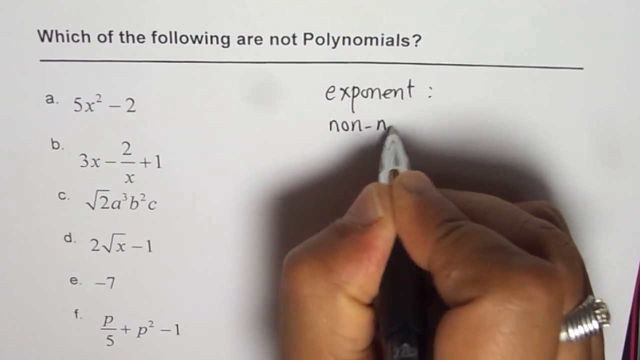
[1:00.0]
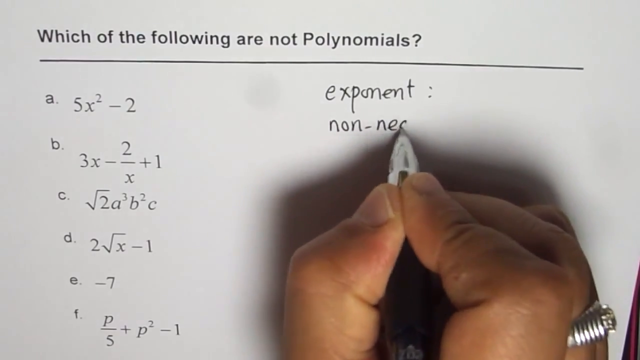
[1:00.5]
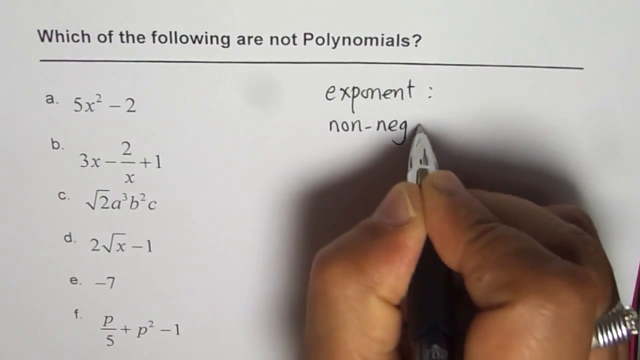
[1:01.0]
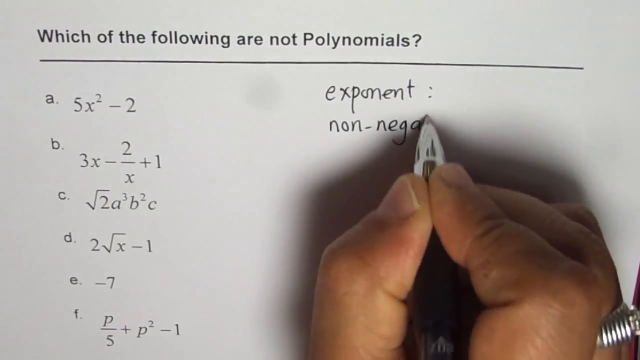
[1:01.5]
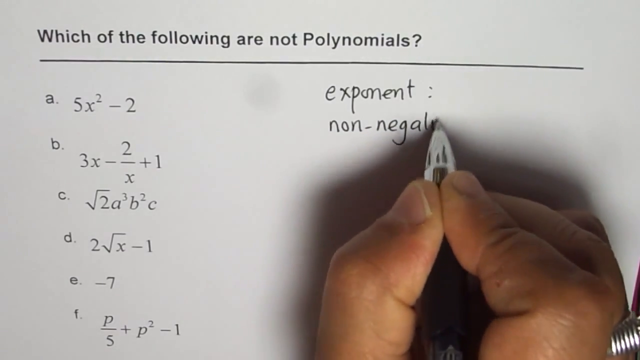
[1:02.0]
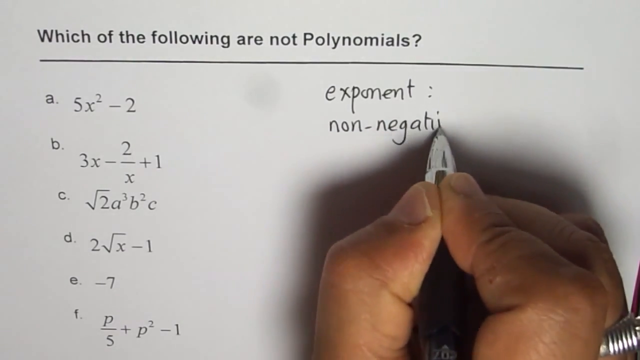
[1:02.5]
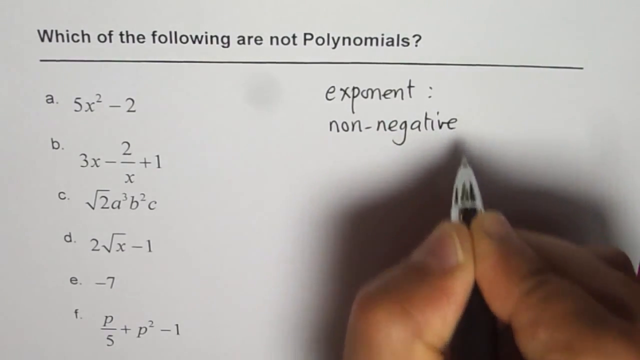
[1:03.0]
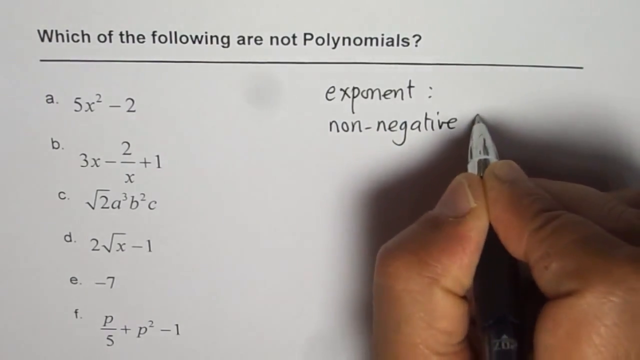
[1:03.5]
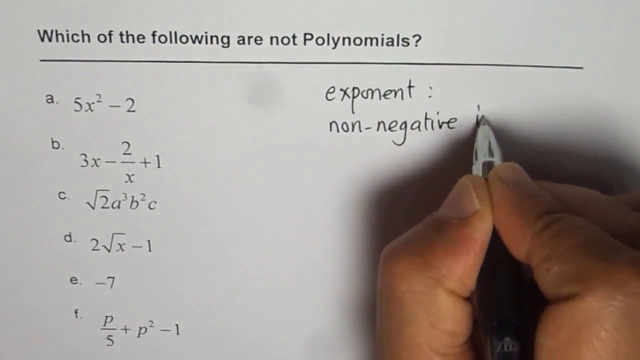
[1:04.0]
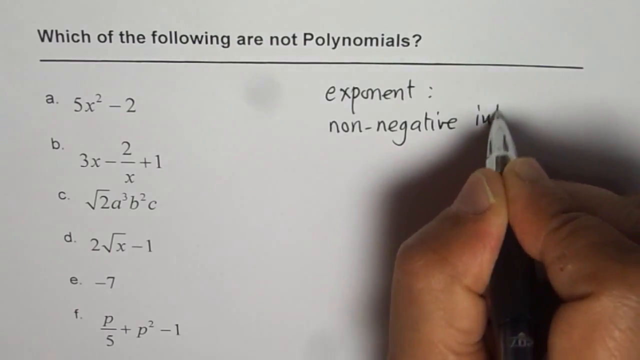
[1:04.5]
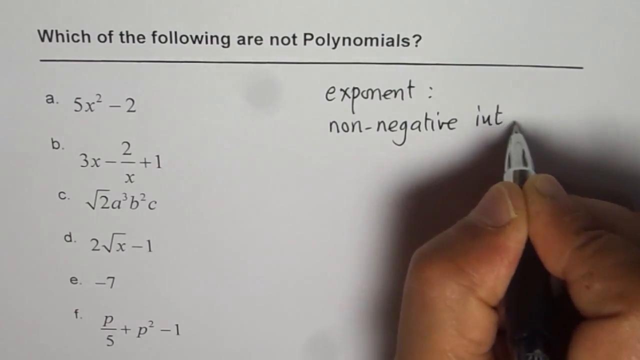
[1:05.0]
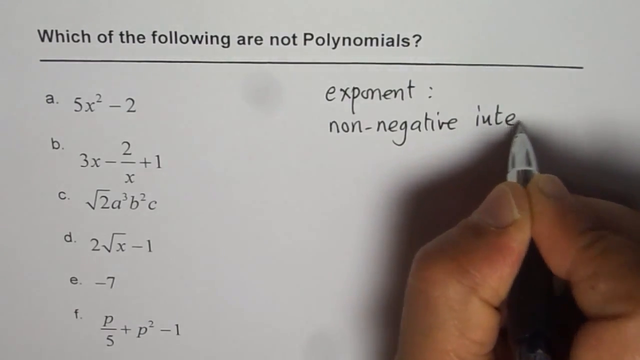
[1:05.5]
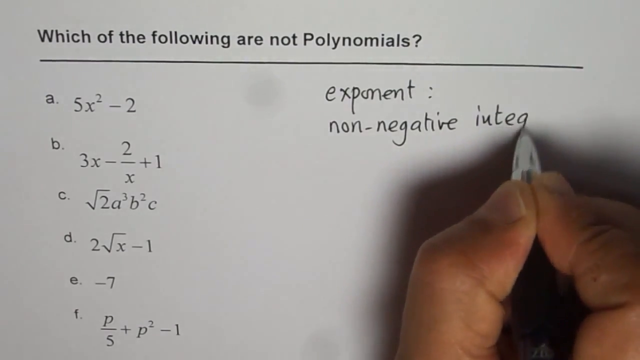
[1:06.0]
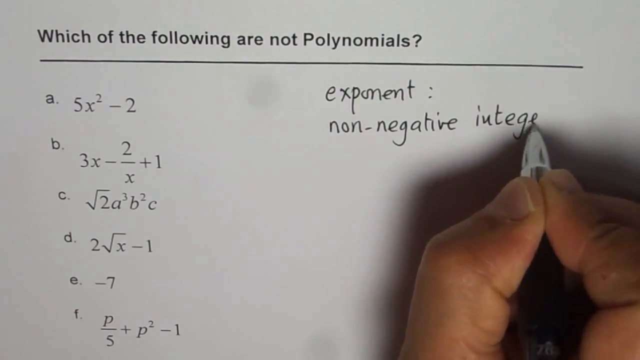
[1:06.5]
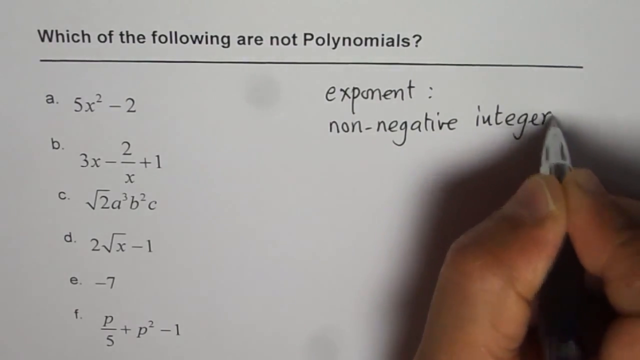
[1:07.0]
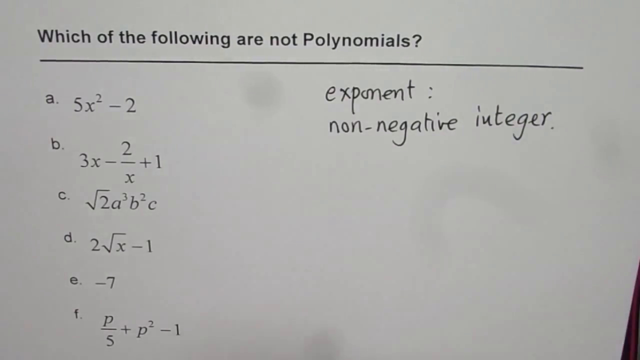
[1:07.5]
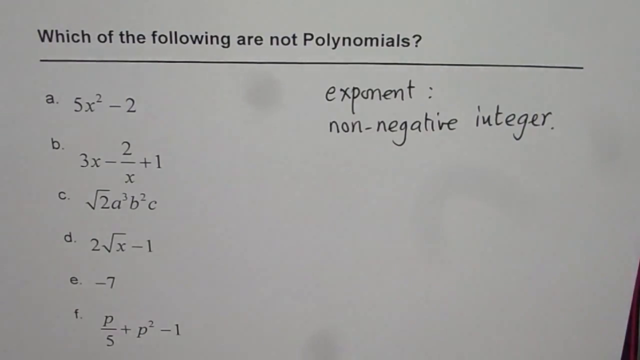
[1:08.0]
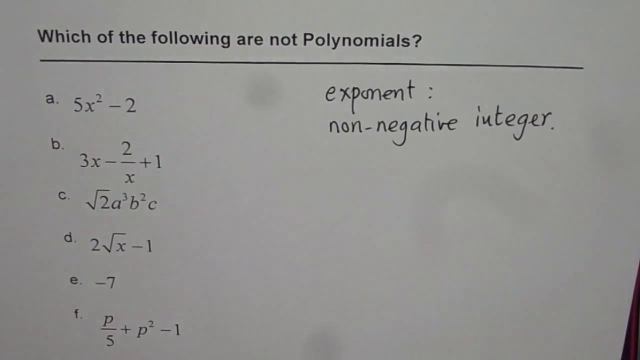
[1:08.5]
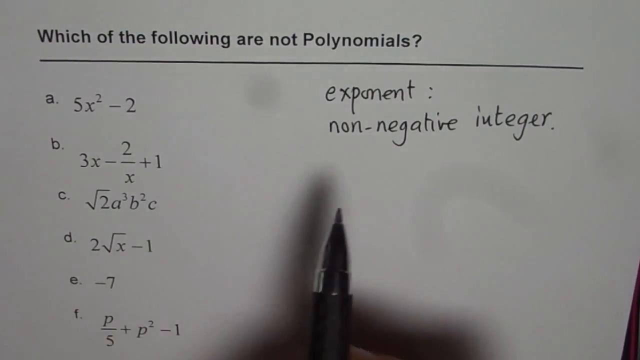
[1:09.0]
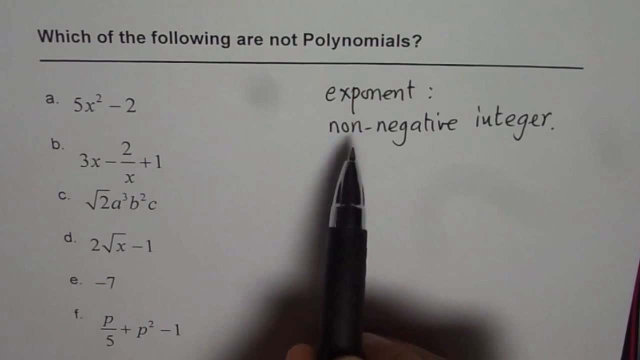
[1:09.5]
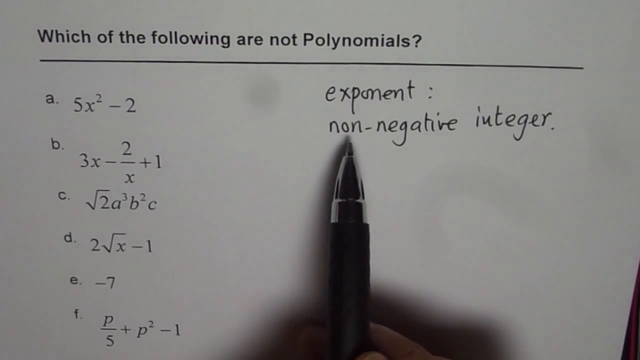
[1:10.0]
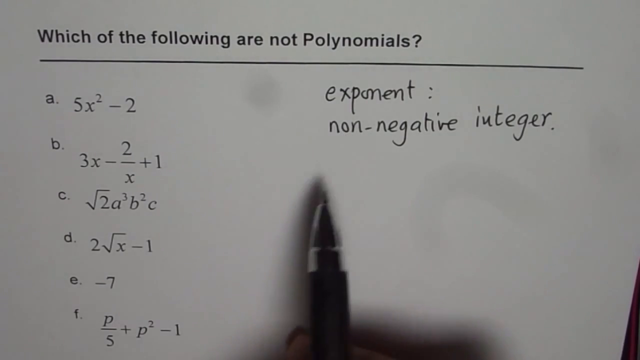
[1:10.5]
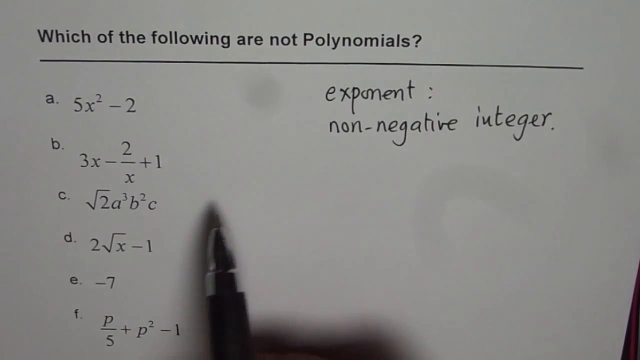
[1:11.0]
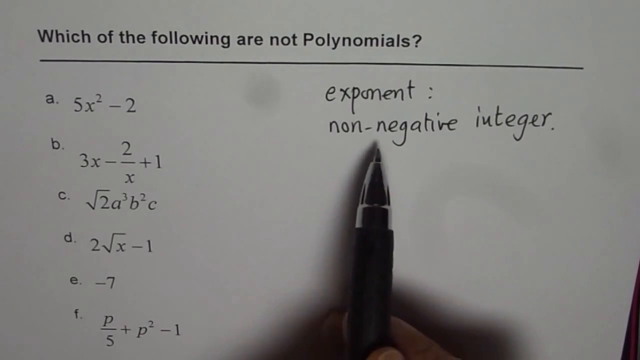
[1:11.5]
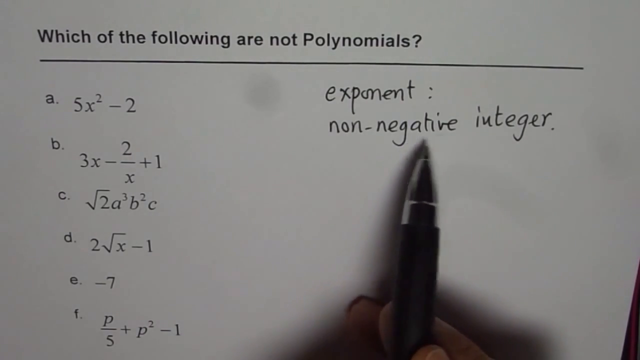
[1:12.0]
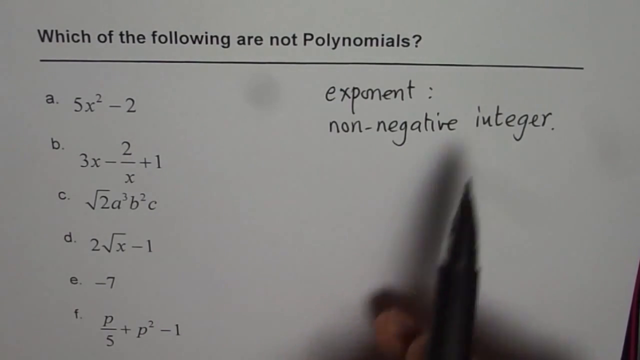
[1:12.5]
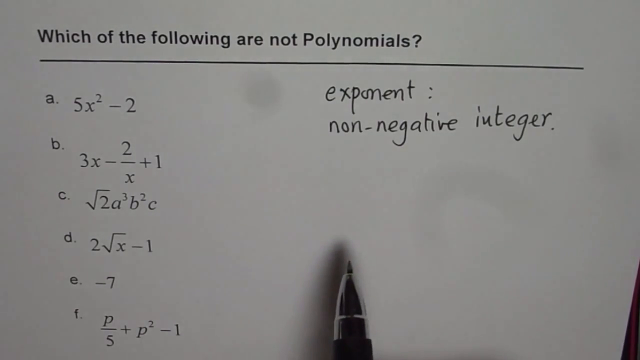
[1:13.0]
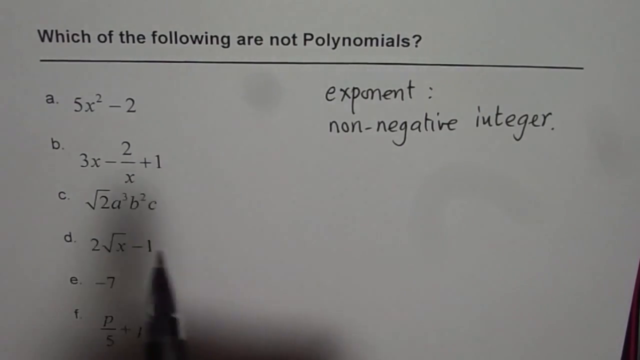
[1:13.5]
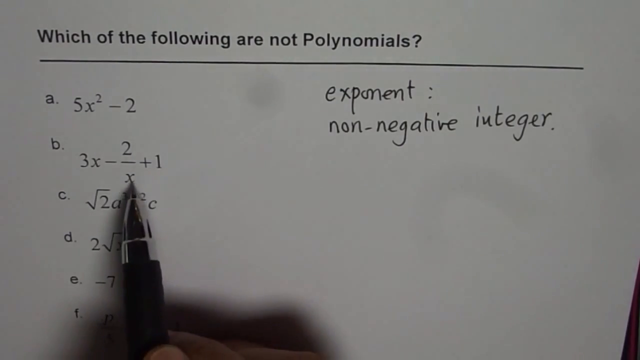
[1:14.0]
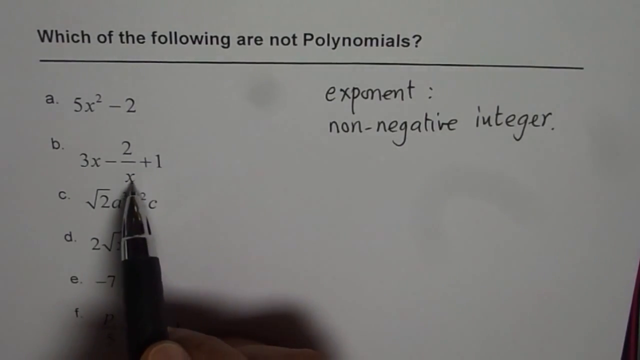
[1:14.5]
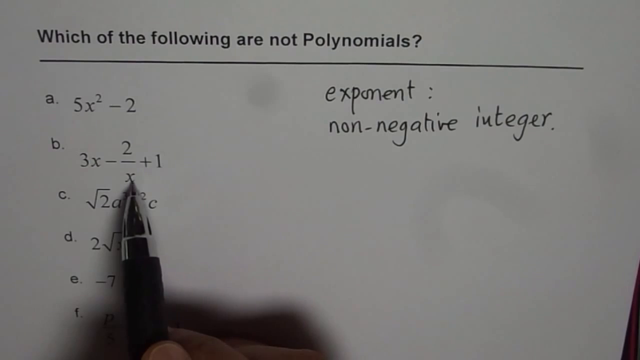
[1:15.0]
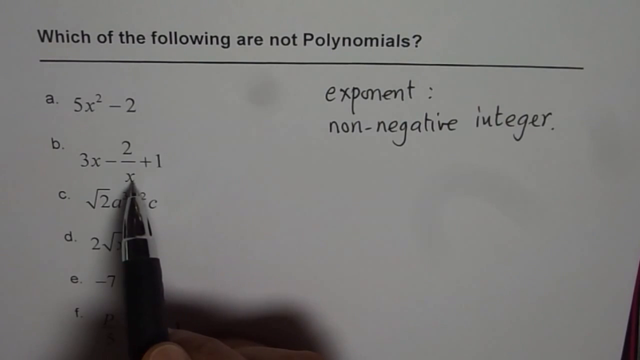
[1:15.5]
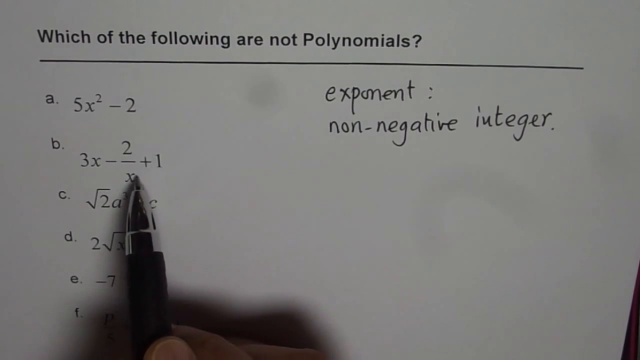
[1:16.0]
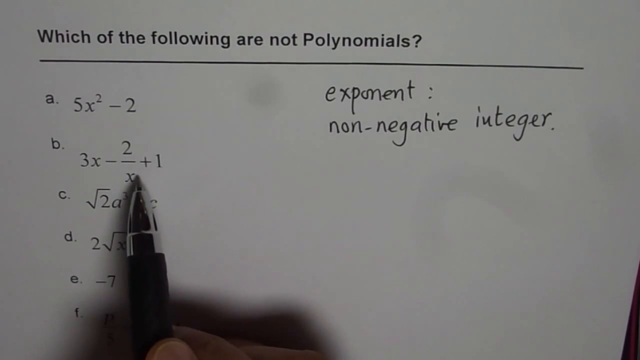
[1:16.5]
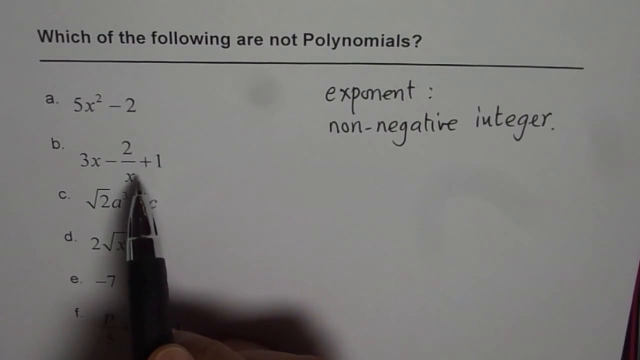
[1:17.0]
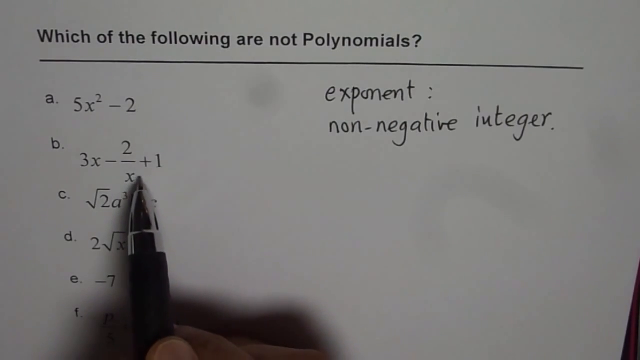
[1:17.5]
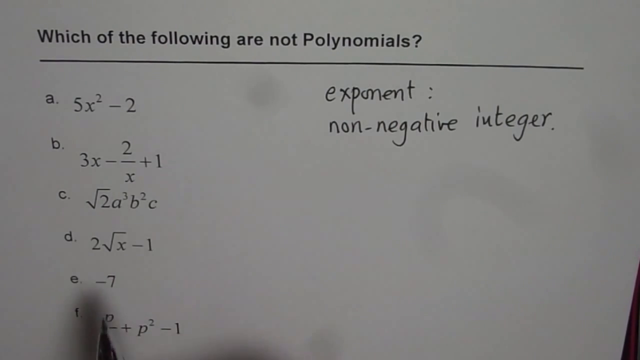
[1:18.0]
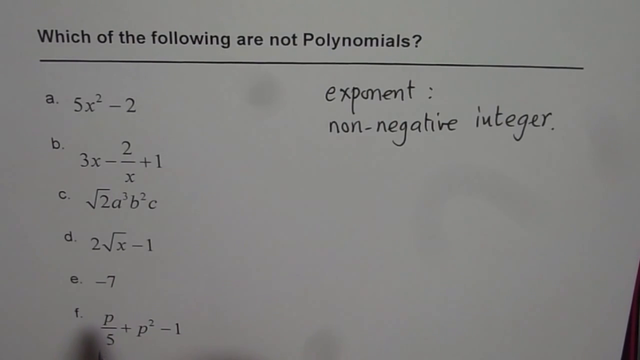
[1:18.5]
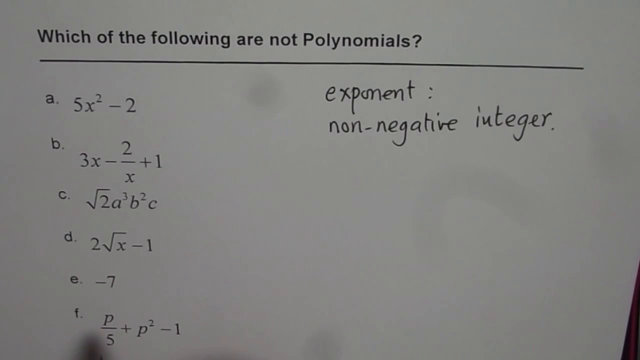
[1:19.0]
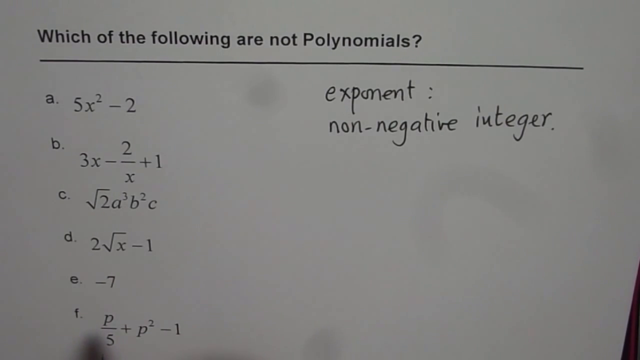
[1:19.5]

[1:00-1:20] The silver casing around the pen's tip is still visible, with the tip sticking out. Where the silver part meets the black grip, the thumb presses down on the left side; the side of the thumb and about half of the thumbnail are visible. The pointer finger rests at an angle, somewhat on the top and somewhat on the side, showing its side, a little of its top and half of its fingernail, and a little of the side of the middle finger is visible. Shadow falls beyond the thumb, along the right side and under the pen, and between the fingers the black grip runs down, ending with a little silver at the bottom. The pen writes "exponent" and underneath it "non-negative integer", then points at "non" and then at "negative integer", and moves down to the second x in B, pointing at it and tapping on it a little, up and down. While writing, the fingers grip tightly: the side of the thumb visibly pushes into the pen and the pointer finger flexes slightly.